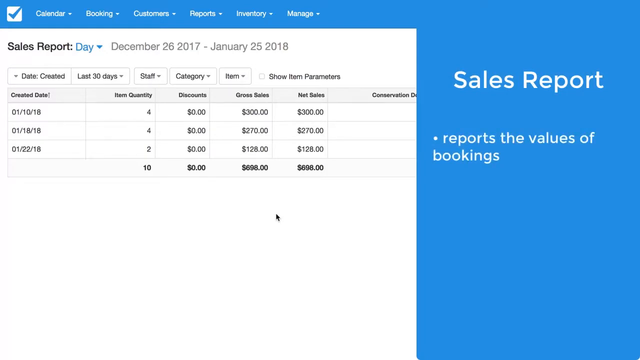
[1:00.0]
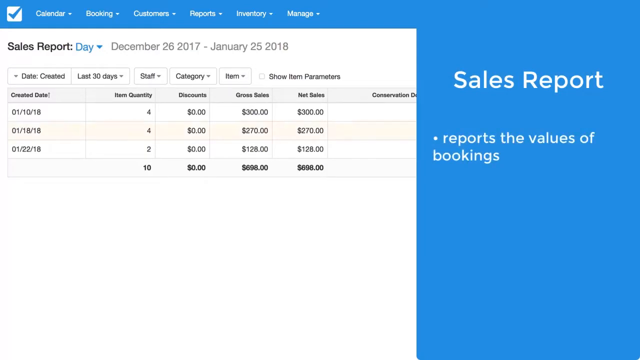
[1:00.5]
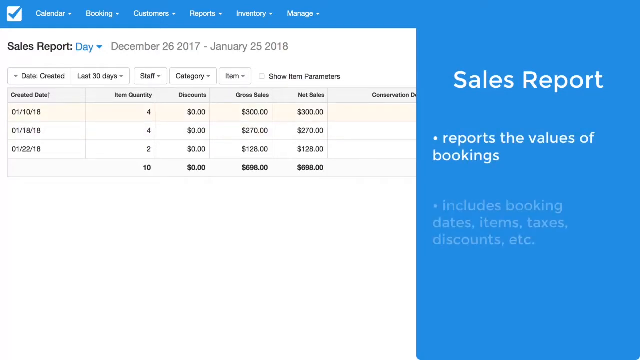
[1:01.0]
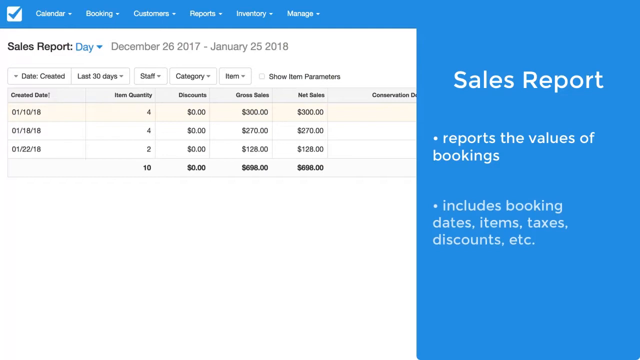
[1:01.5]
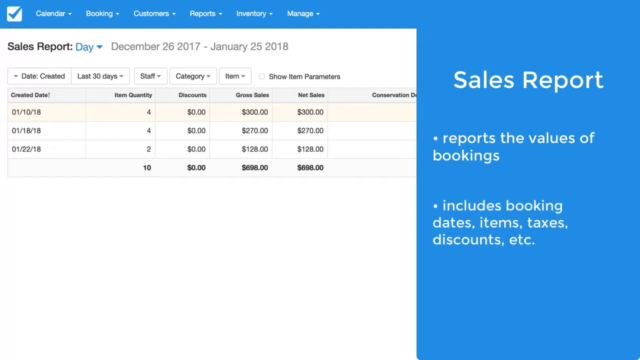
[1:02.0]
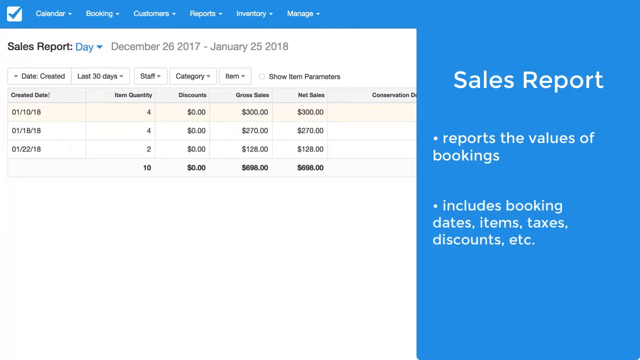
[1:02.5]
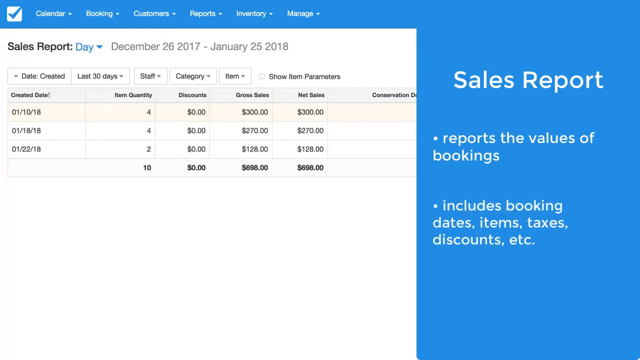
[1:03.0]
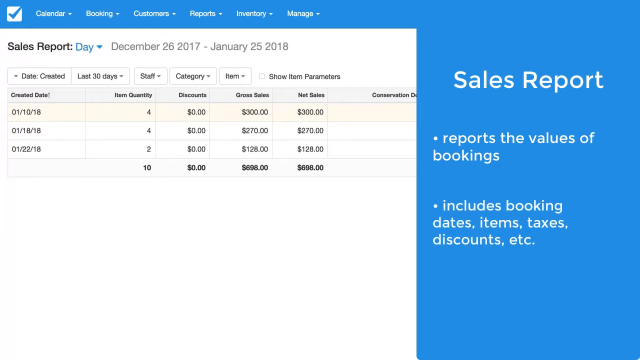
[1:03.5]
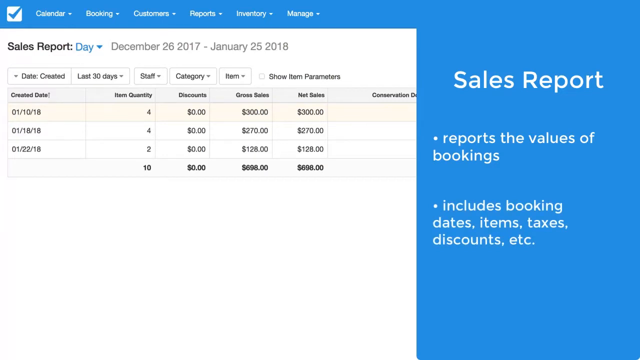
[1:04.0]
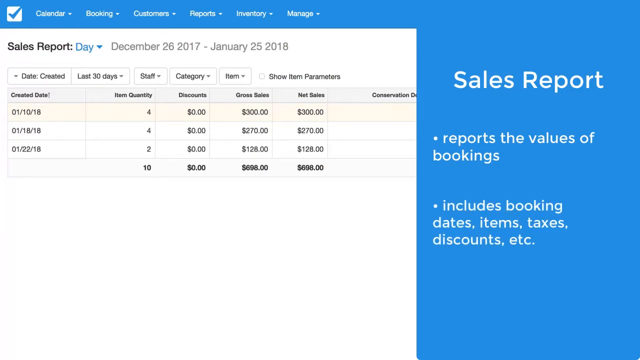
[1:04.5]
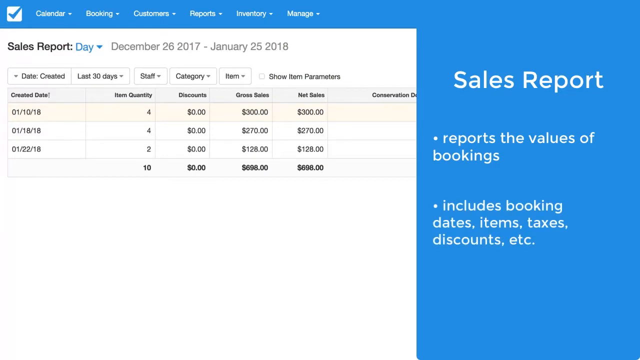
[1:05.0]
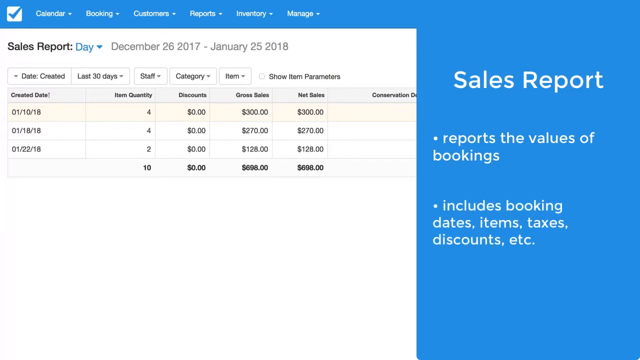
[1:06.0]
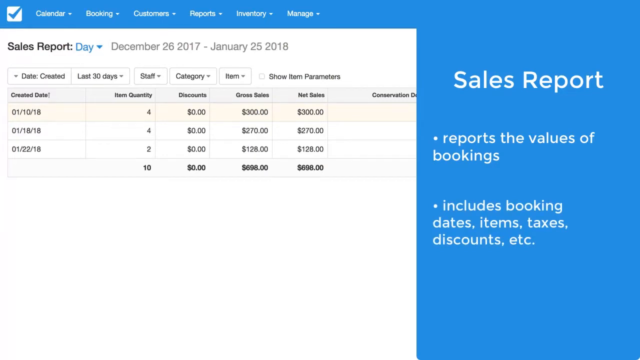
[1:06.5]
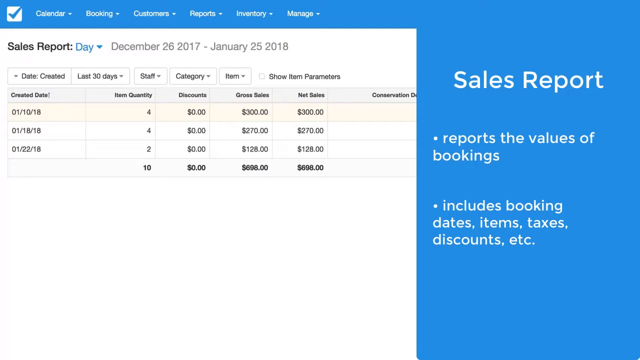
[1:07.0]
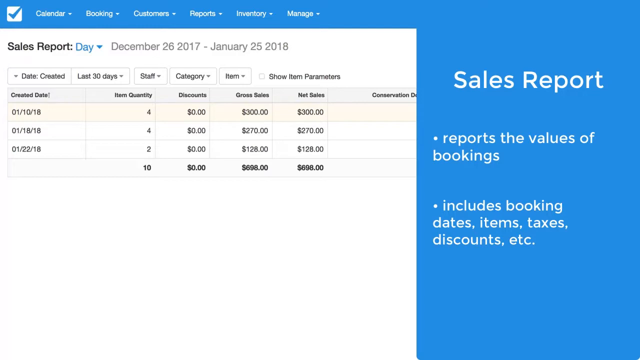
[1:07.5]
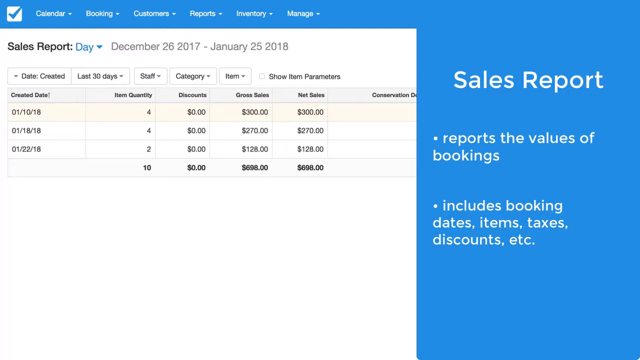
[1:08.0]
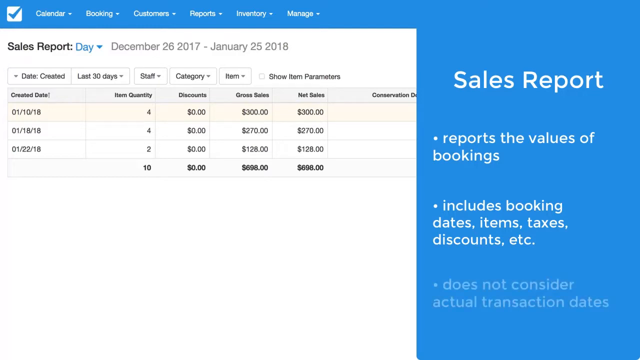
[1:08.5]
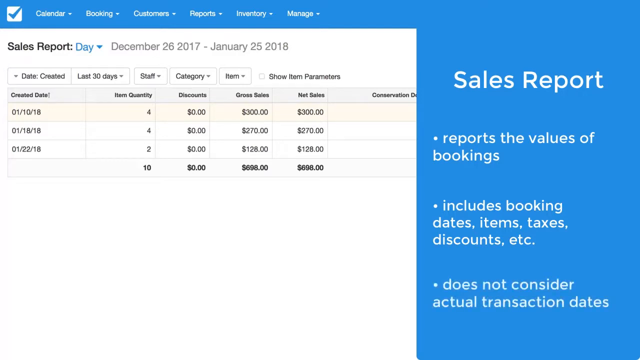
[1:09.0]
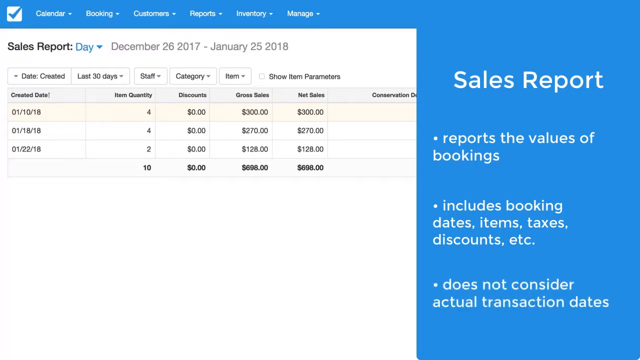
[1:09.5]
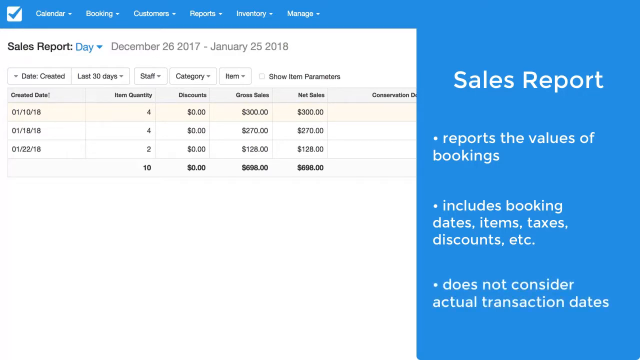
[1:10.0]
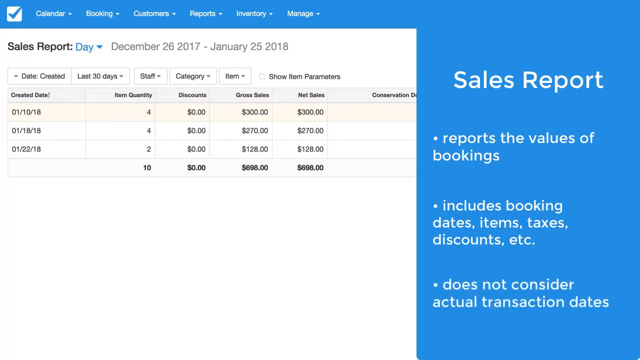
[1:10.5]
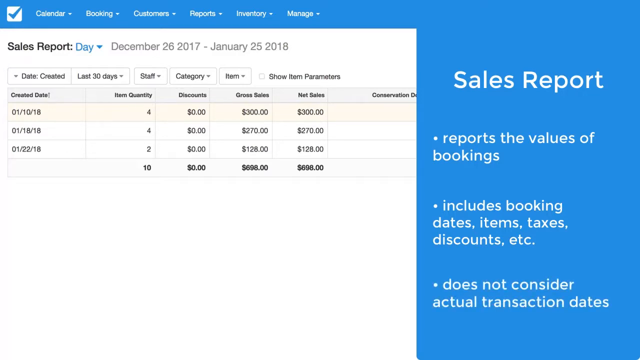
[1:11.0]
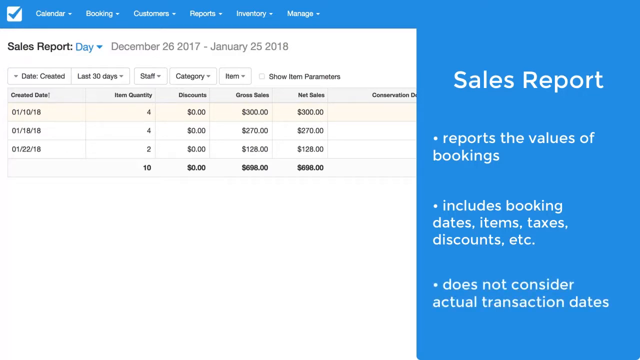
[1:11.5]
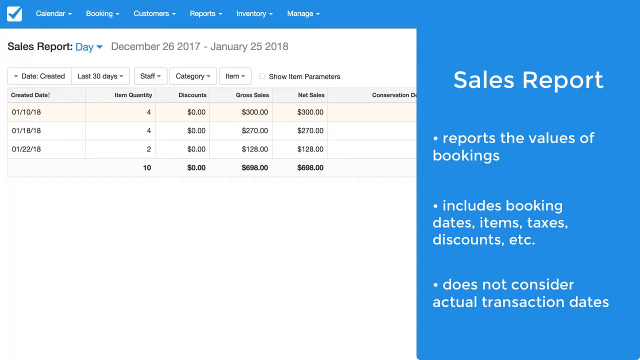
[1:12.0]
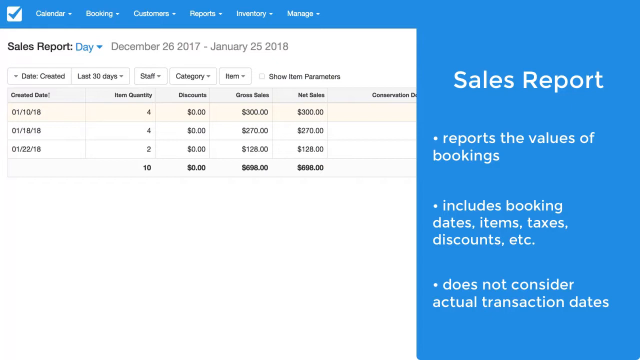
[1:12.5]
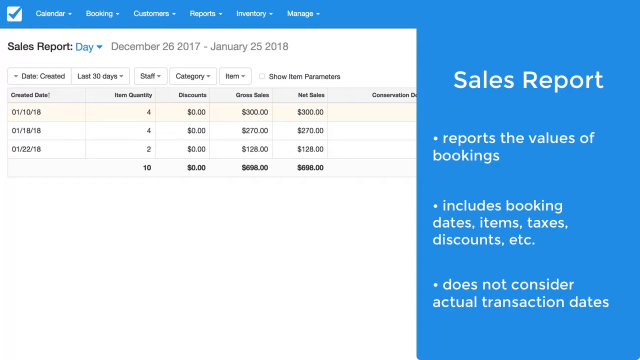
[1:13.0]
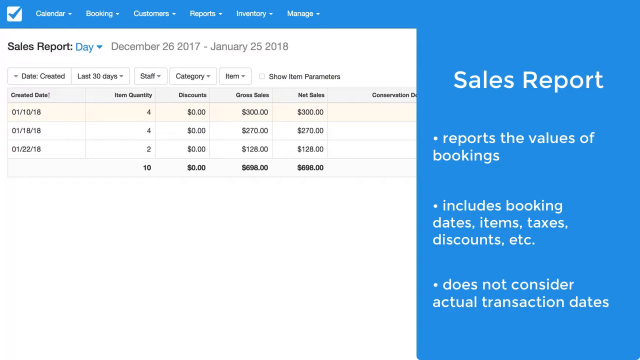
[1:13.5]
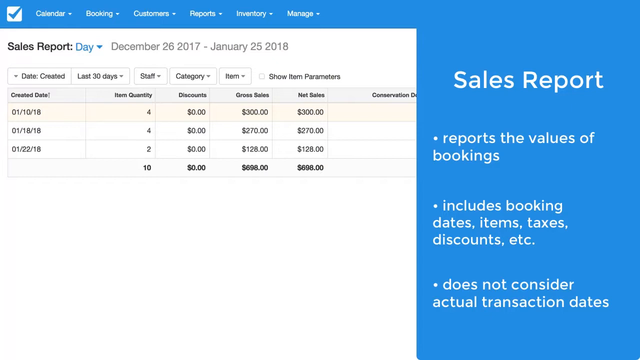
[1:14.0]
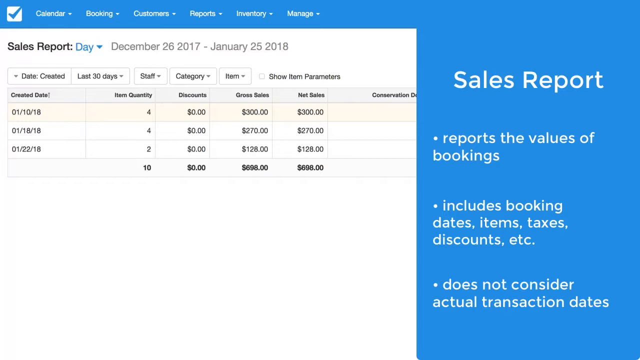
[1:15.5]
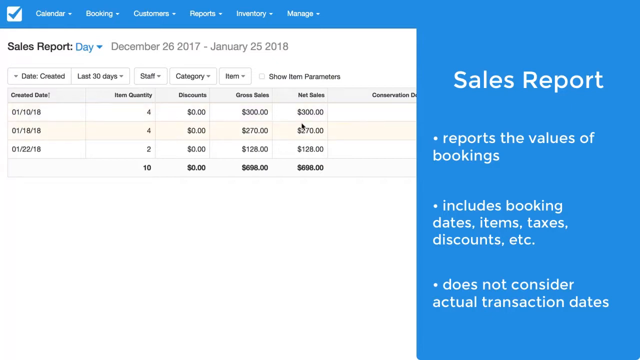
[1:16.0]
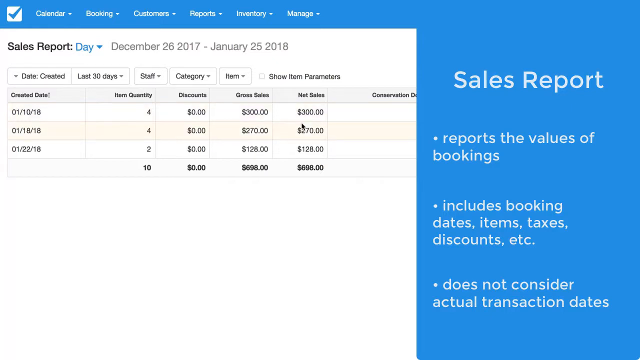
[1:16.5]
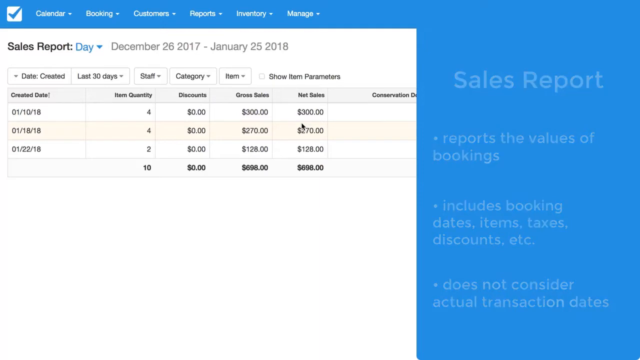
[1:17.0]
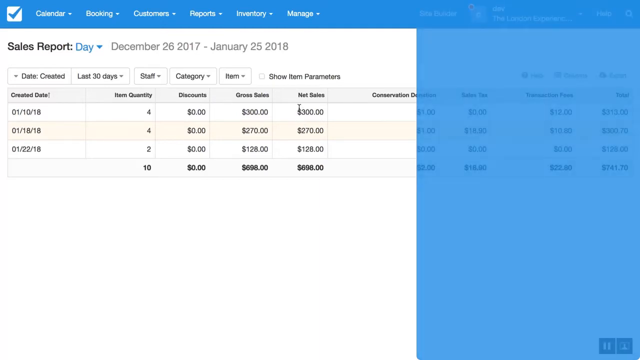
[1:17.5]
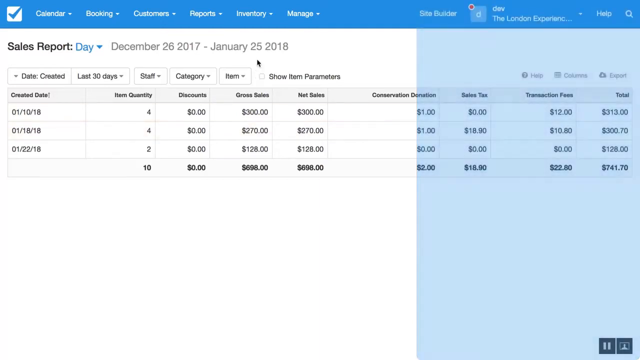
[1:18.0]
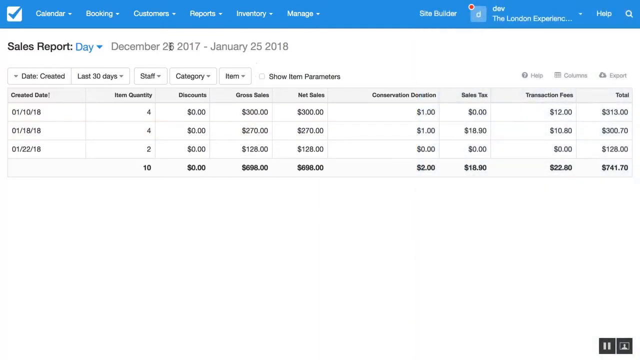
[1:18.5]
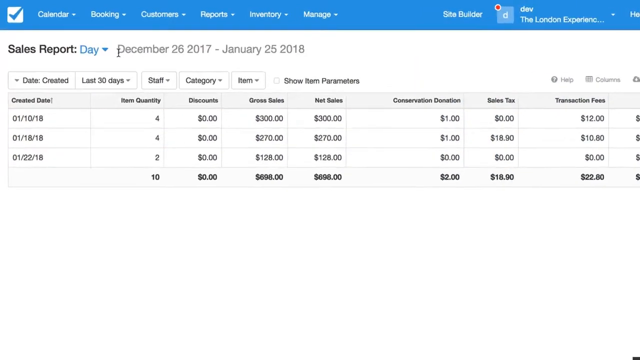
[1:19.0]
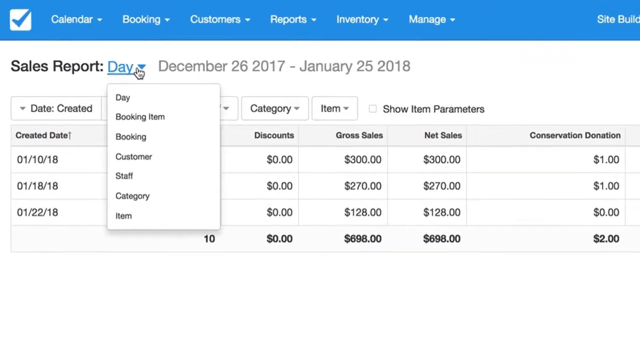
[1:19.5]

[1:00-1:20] A second bullet point appears below the first, reading "includes booking, dates, items, taxes, discounts, etc." The page on the left shows a sales report for transactions between December 26, 2017 and January 25, 2018, with gross sales and net sales both at $698. A third bullet point then appears in the bottom right corner underneath the second, reading "does not consider actual transaction dates." The mouse pointer moves to the top left corner, the view zooms in to the top left corner, and the pointer clicks the word "day," opening a small window with the options day, booking item, customer, staff, category, and item.